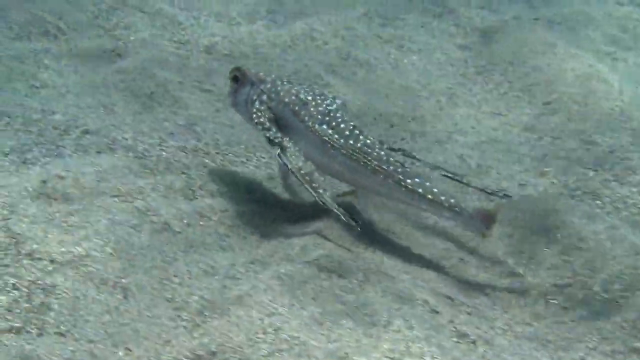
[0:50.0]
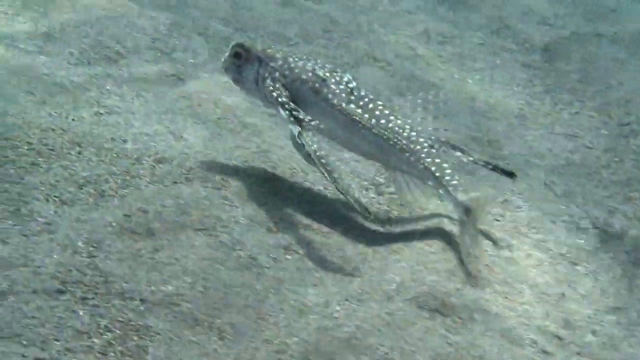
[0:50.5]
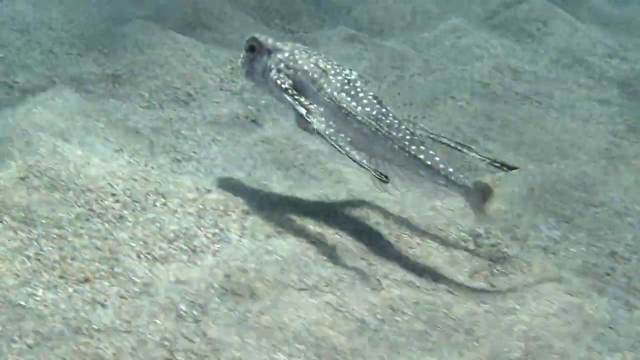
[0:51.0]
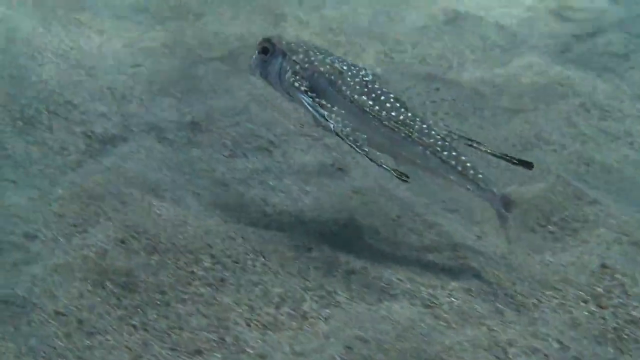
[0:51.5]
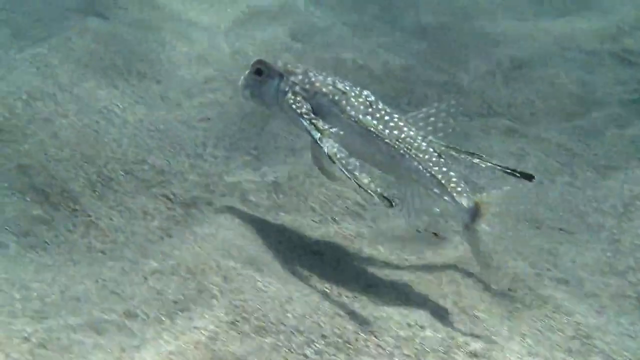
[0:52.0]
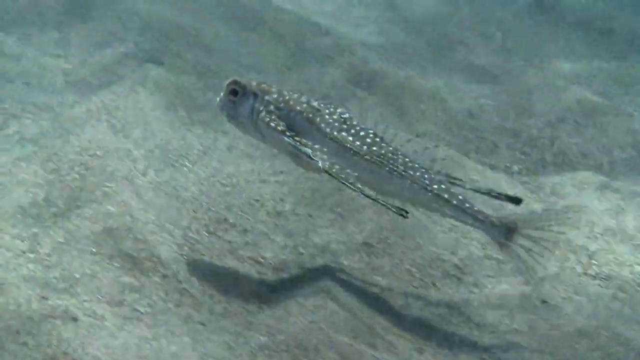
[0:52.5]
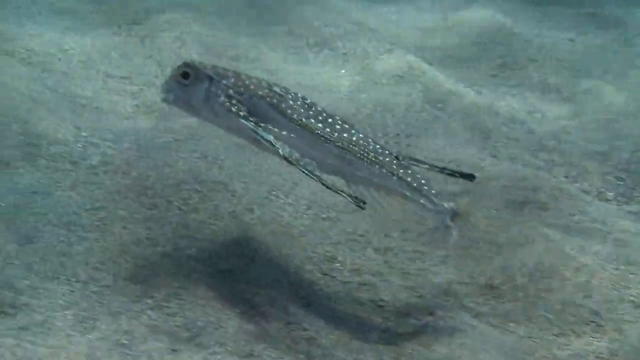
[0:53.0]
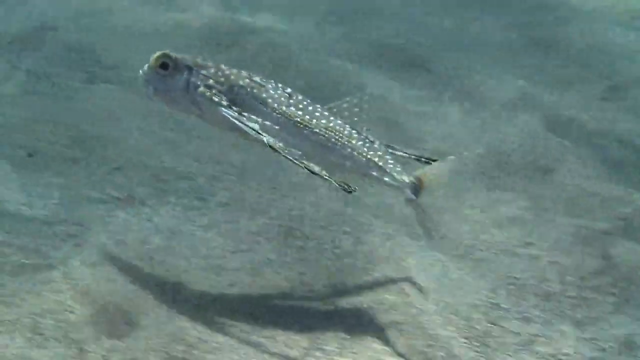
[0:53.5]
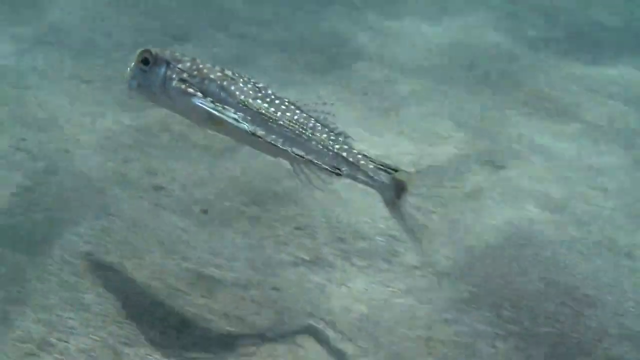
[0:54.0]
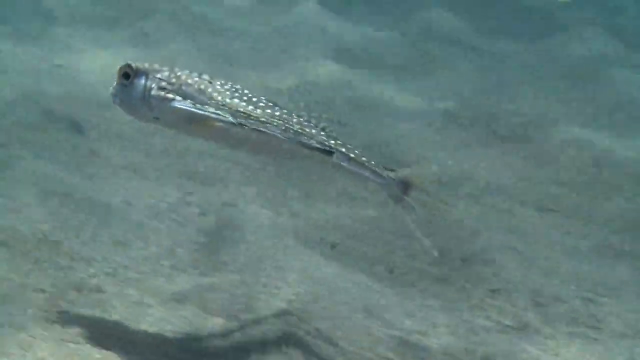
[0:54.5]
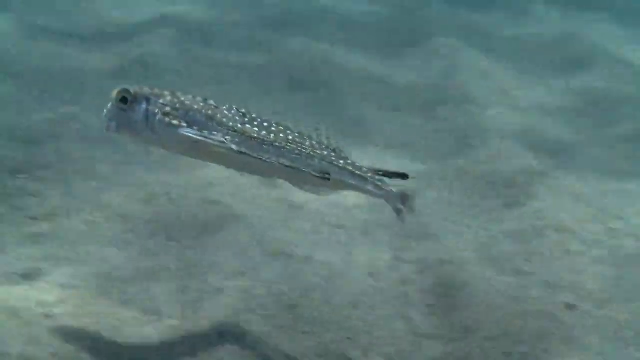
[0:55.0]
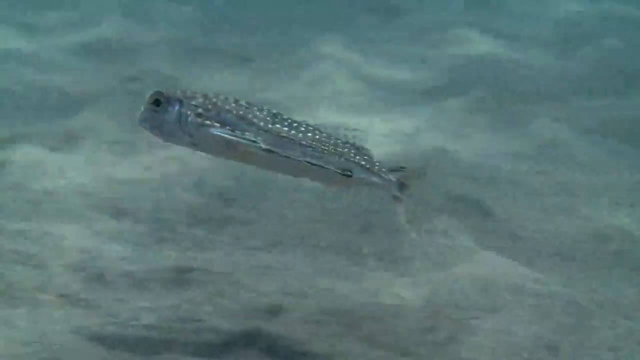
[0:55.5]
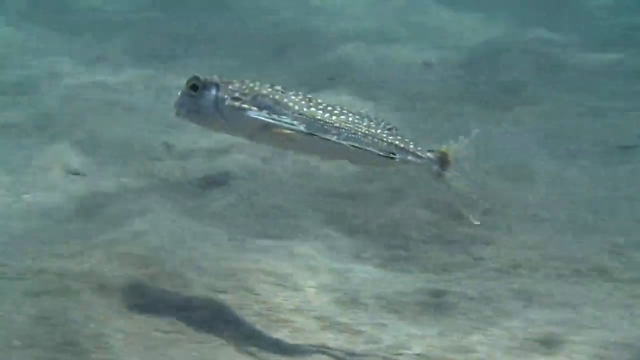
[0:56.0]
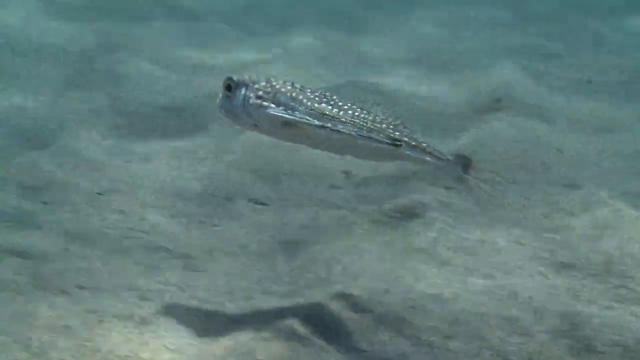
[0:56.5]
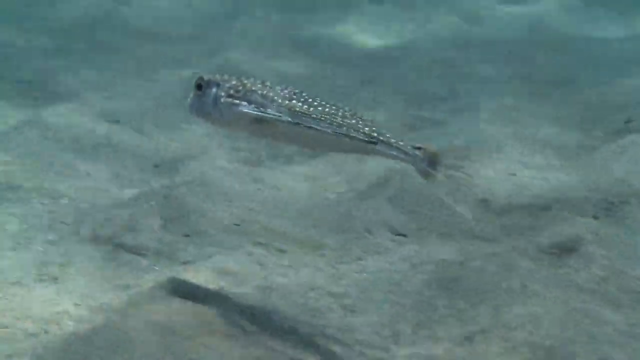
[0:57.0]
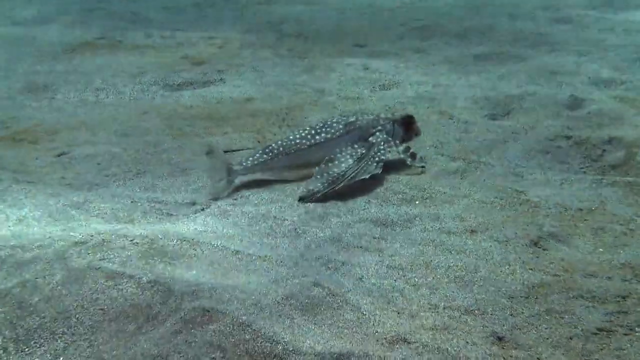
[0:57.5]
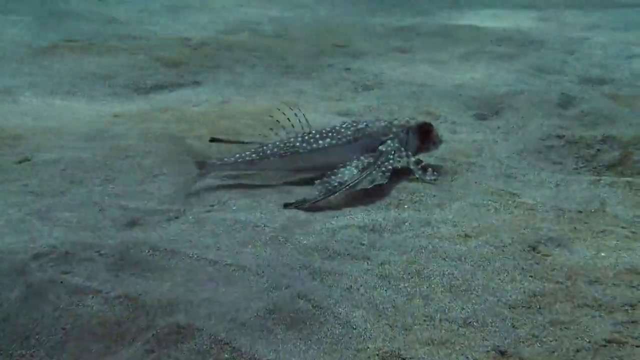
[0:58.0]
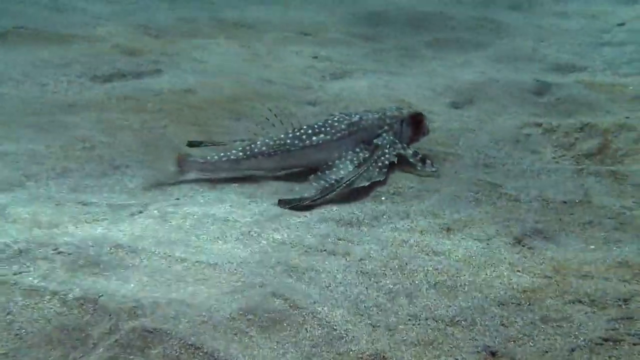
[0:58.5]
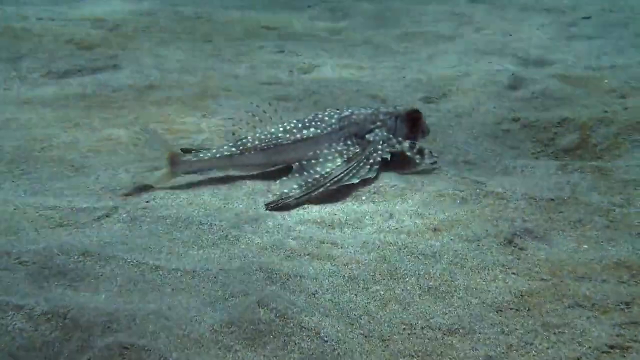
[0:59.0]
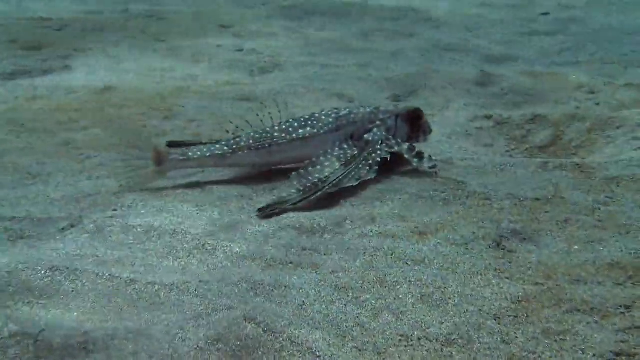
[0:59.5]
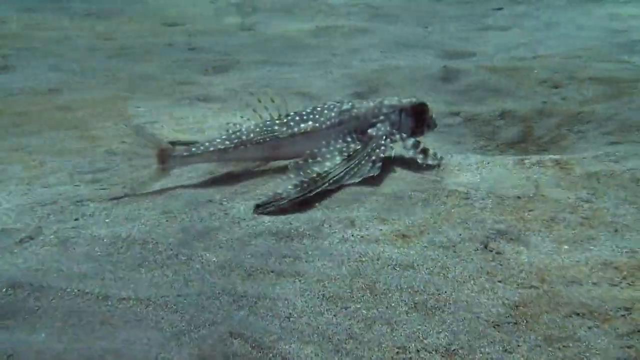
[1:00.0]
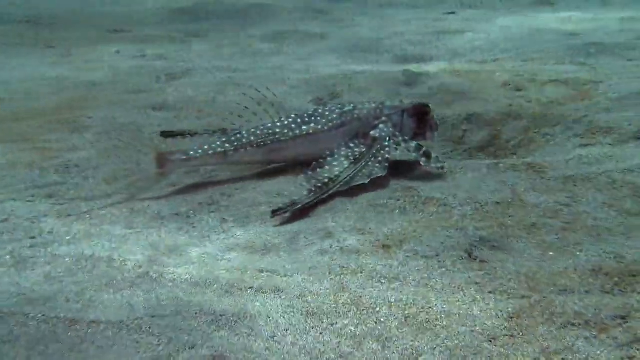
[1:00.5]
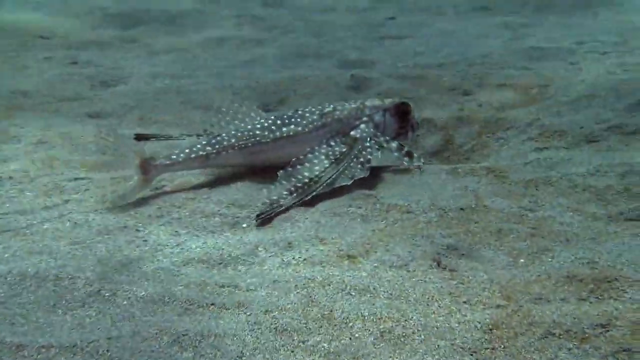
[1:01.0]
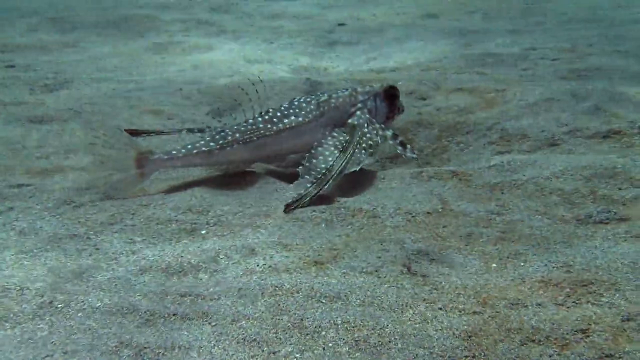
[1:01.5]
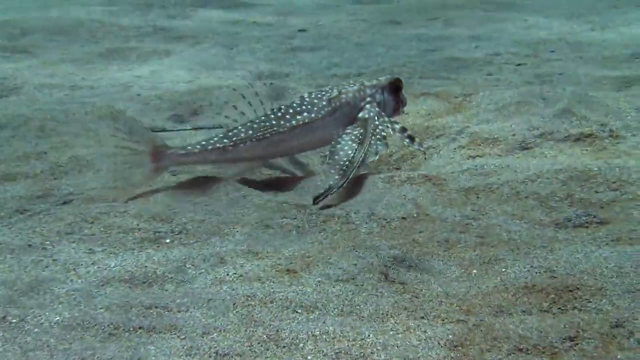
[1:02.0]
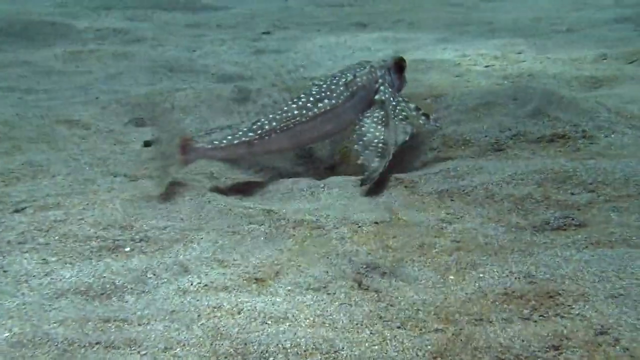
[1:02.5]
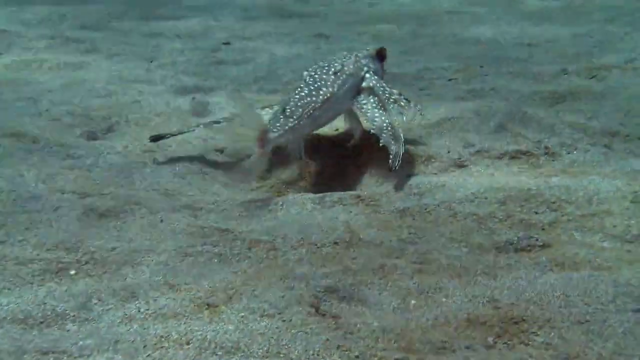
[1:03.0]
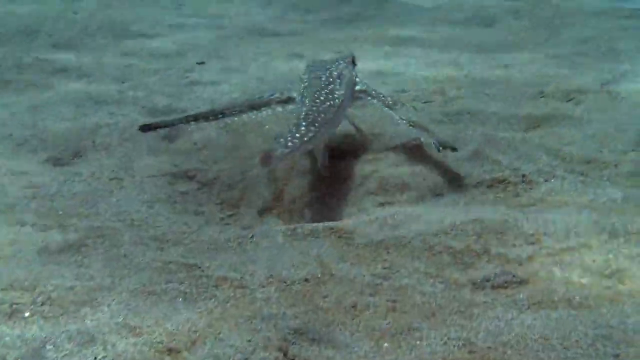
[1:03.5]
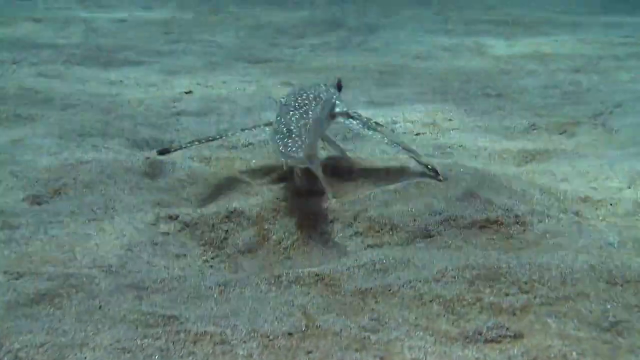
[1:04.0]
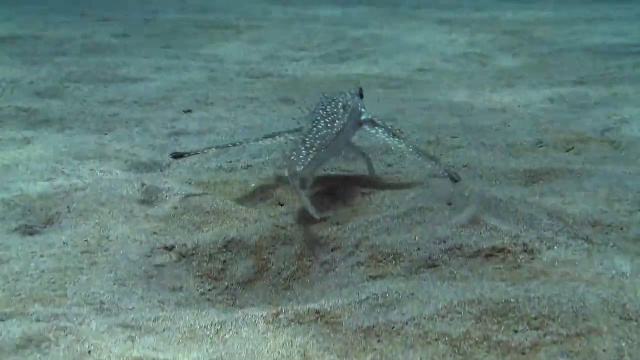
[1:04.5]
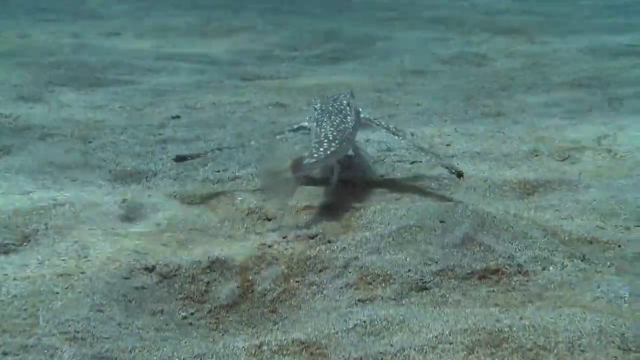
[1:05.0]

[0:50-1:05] A fish swims along a very sandy part of the ocean bottom and looks highly specialized for this environment. It has a long body that is thick in the center and very big eyes. Several fins come out of the sides of its body: two long fins, apparently for swimming, and four shorter fins that kind of act as back legs and front arms. The back fins help it sort of walk along the ocean floor, while the front fins act sort of like arms to brush sand out of the way. The fish is camouflaged and blends in very well with the sandy bottom: it has white spots all over the top part of its body, and the rest of the body is a brownish color, so from above it looks very much like sand.